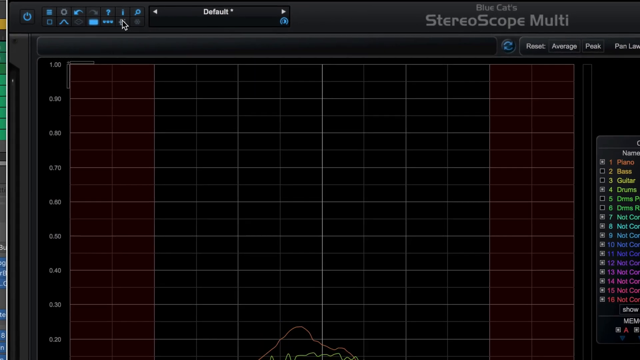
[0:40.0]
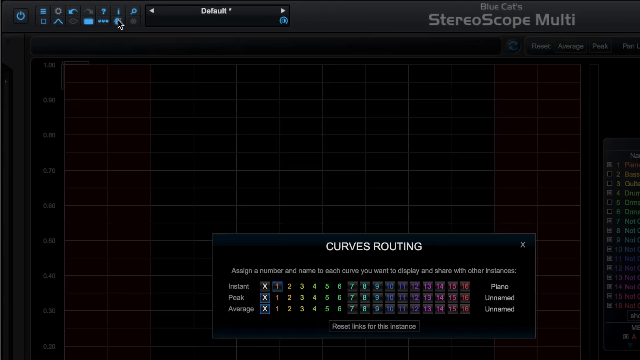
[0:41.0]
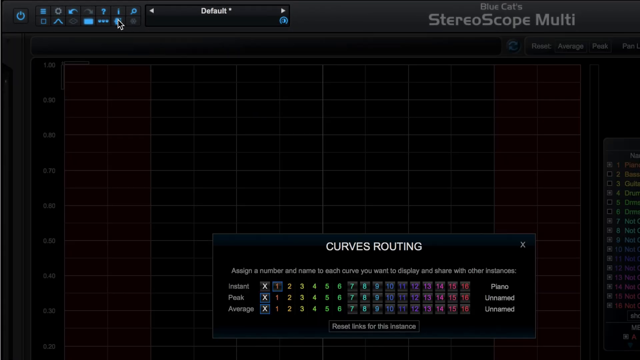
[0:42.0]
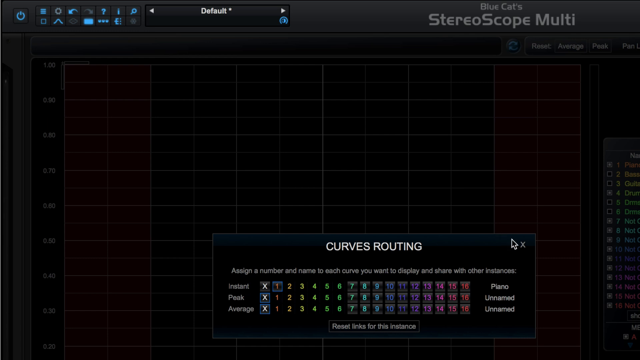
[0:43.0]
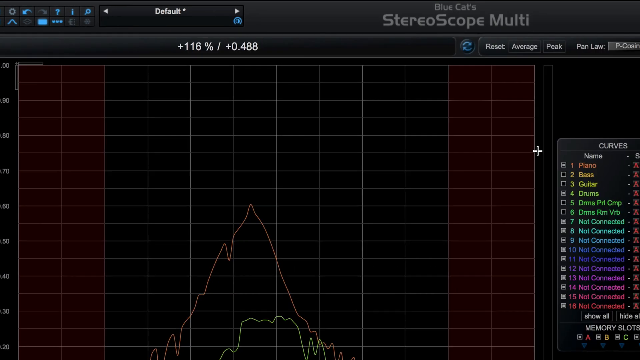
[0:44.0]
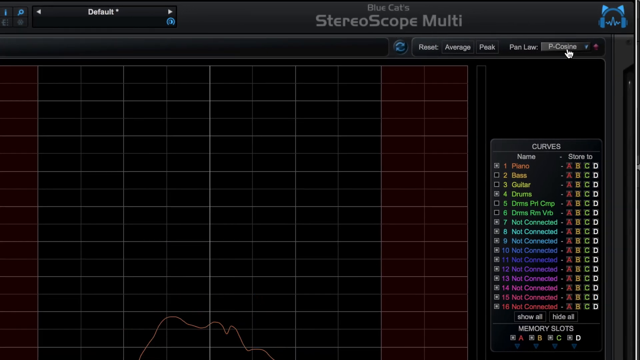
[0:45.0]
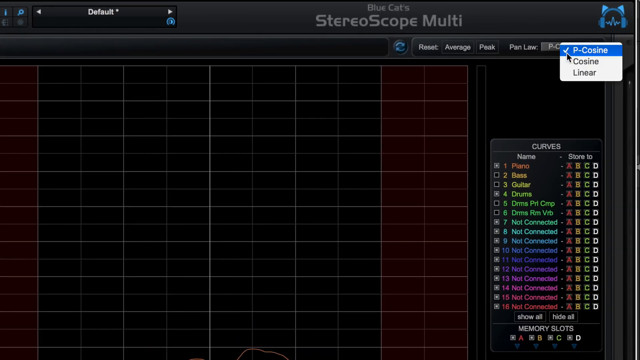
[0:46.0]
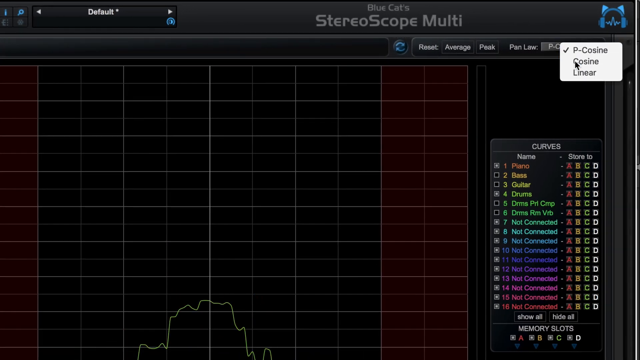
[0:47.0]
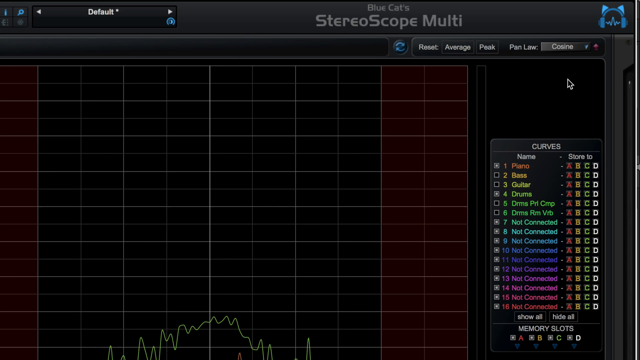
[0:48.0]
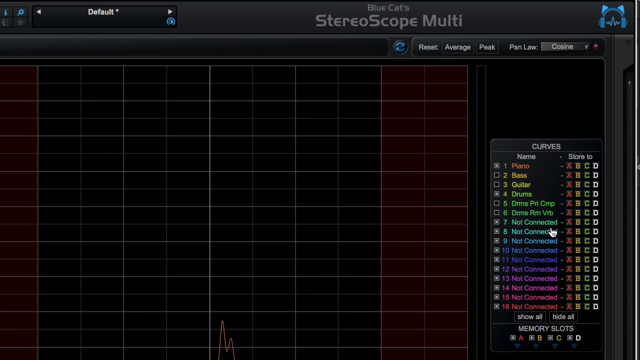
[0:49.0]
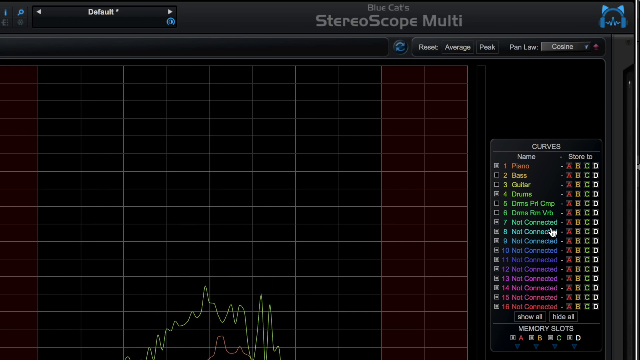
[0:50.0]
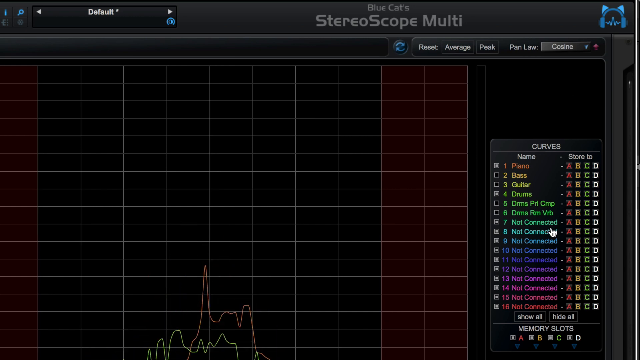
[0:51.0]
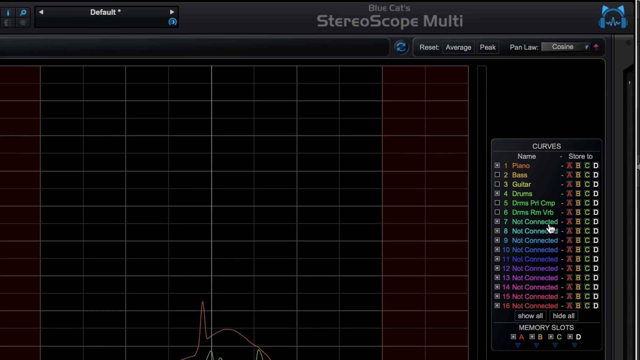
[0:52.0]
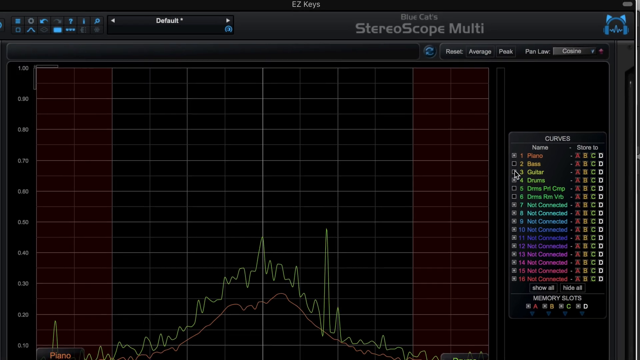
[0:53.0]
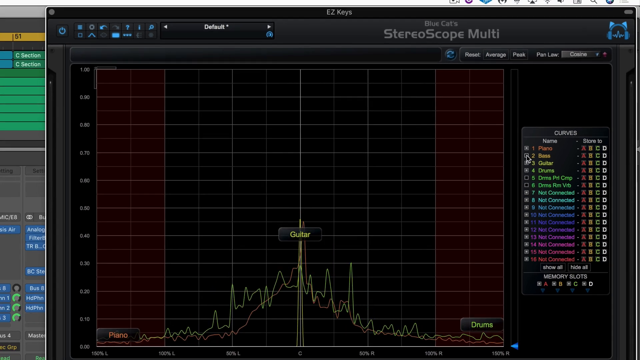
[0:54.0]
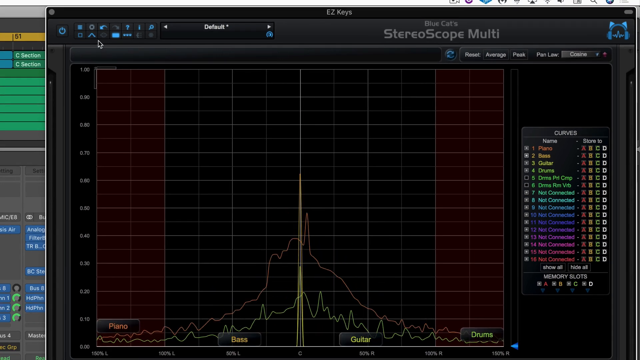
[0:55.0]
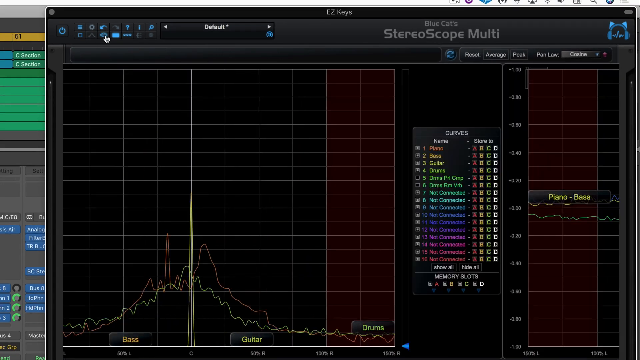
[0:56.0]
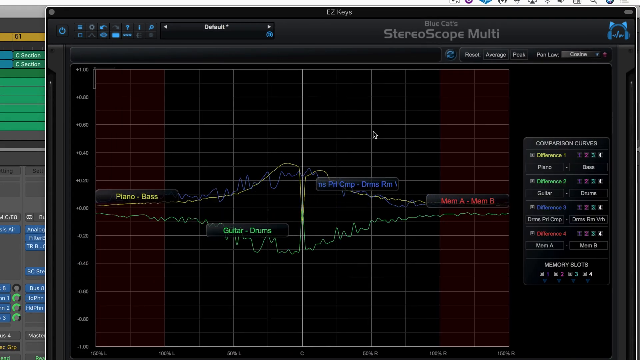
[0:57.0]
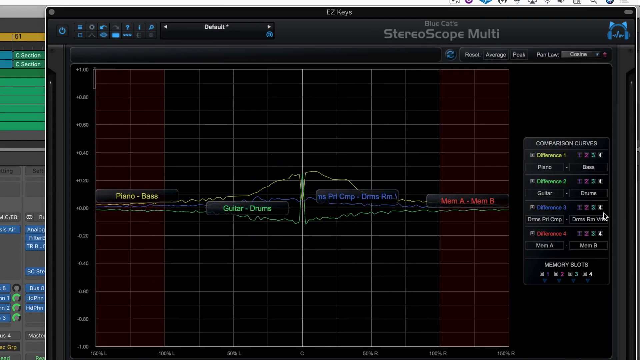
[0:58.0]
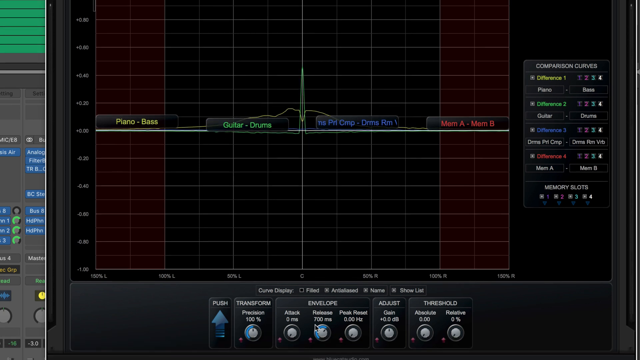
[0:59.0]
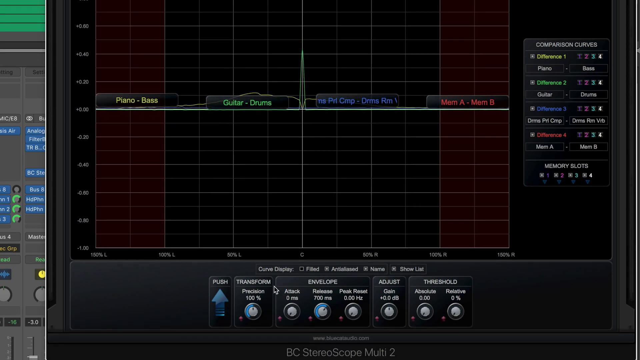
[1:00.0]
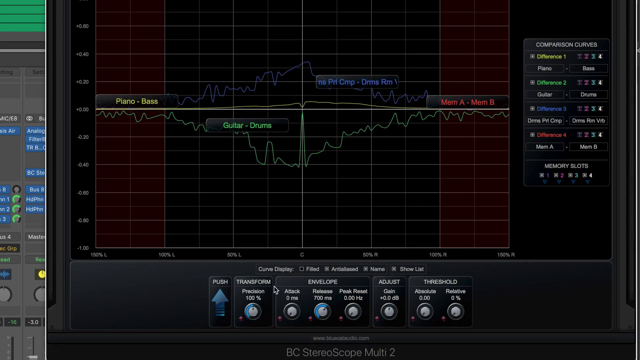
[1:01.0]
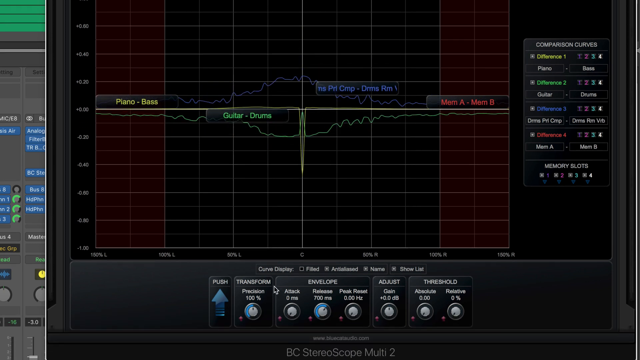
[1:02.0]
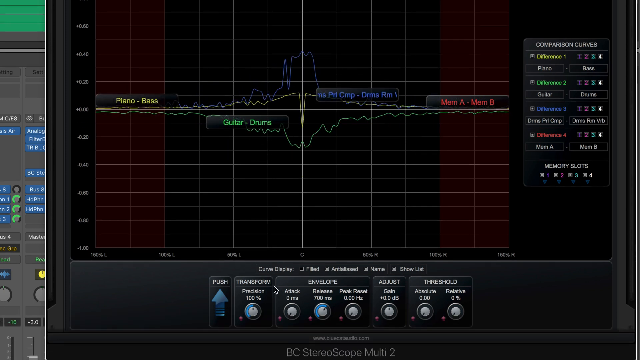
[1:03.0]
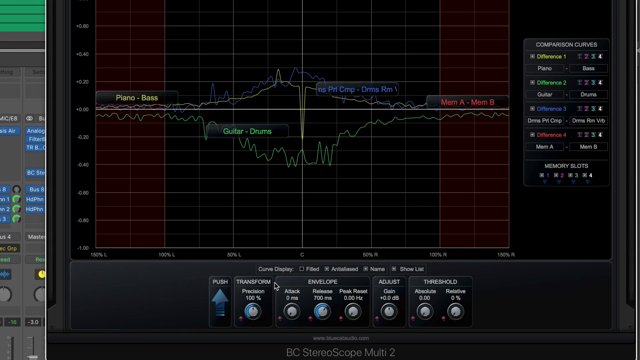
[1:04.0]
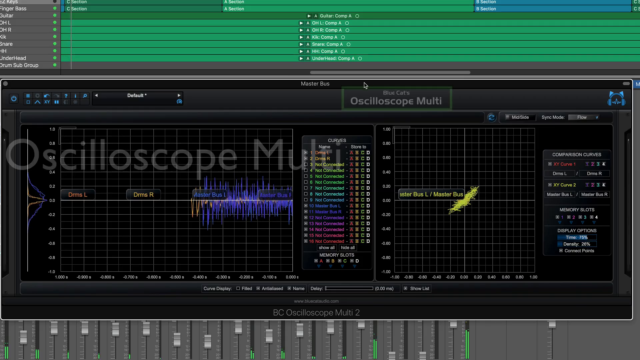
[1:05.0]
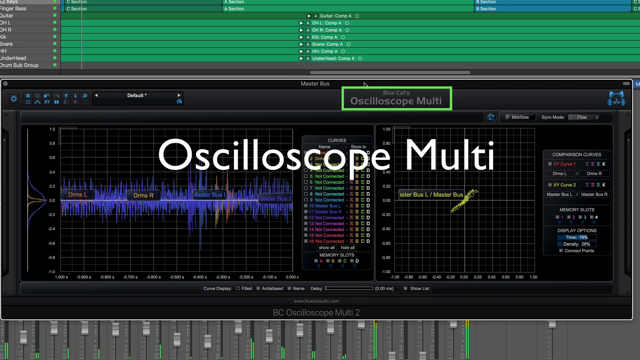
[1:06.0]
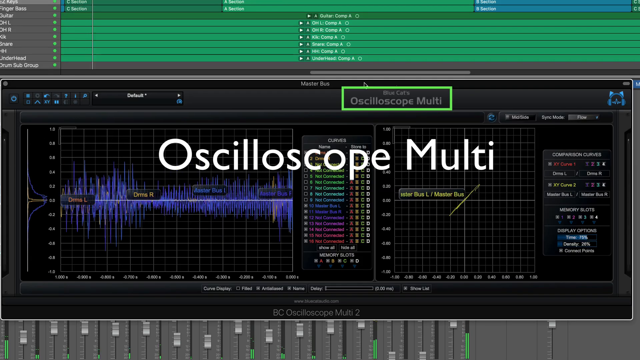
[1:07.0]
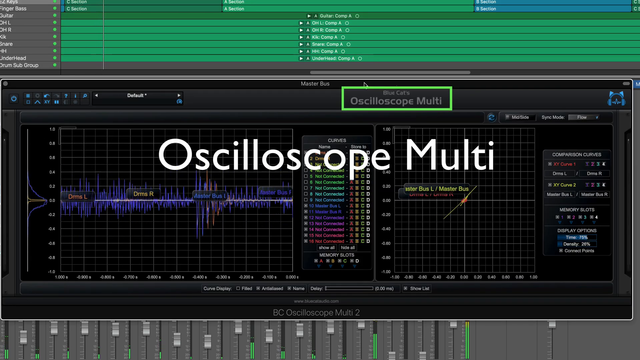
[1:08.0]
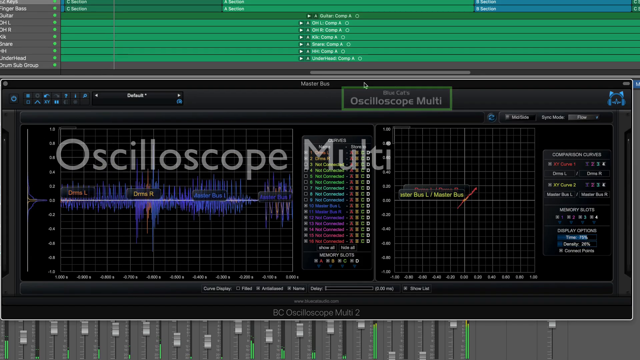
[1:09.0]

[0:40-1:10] A chart that starts out like the earlier ones quickly switches to something totally different. It reads "stereoscope multi" and shows "curves routing," and someone clicks on different things, pulling up different menus. The curves on the side are in different colors: orange, yellow, green, blue, purple. The view flips over to the side and a new screen comes up showing bass and treble, reading "oscilloscope multi mode," with two different charts: one has some yellow color on it, the other a lot of pink and purple. Everything happens very quickly. The software is probably something used for making music in a studio. There is a lot of purple, pink and red, and the charts bounce around wildly. Someone clicks on "curves routing," and it goes to another screen whose text is too small to read.